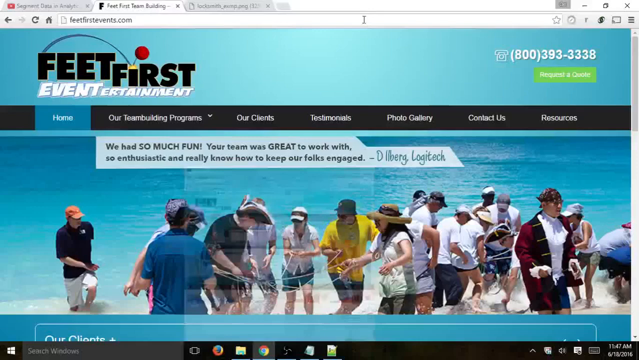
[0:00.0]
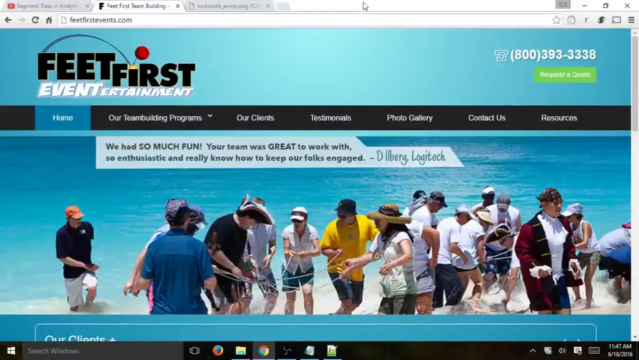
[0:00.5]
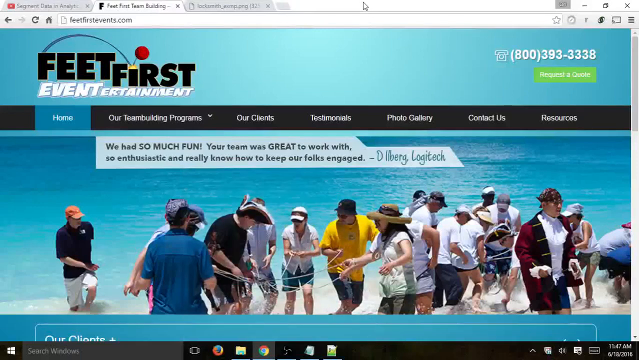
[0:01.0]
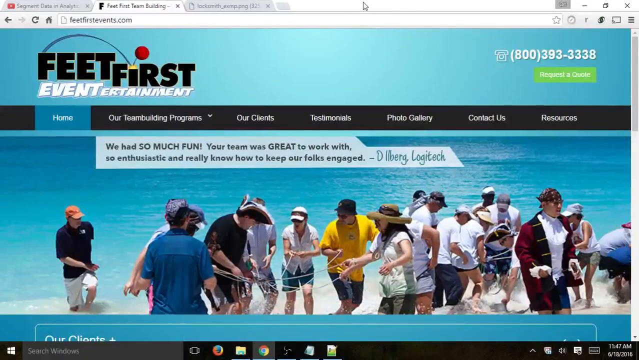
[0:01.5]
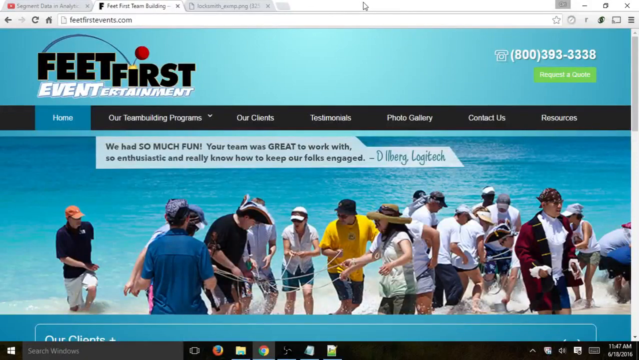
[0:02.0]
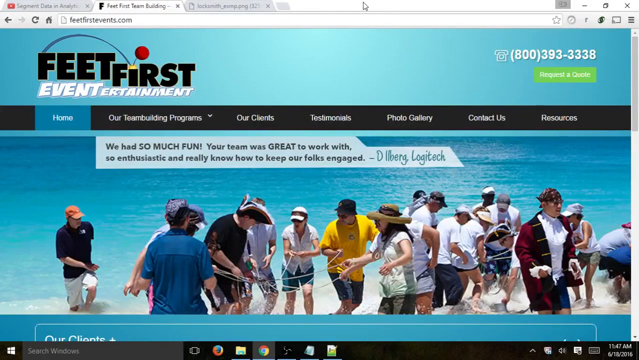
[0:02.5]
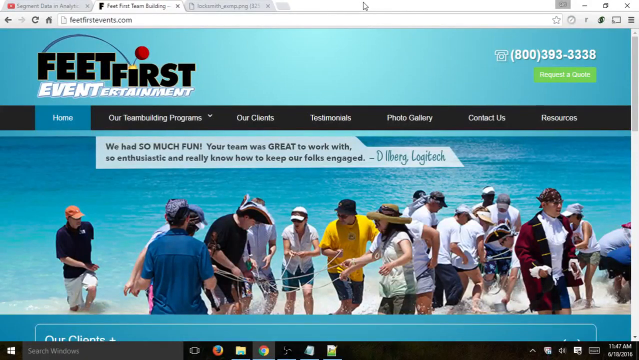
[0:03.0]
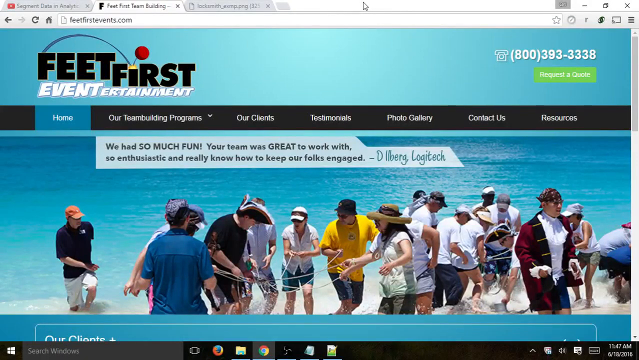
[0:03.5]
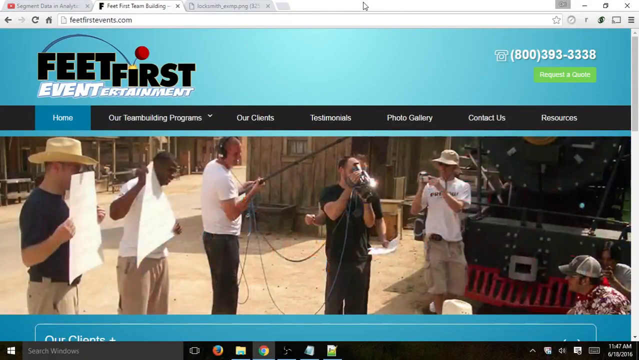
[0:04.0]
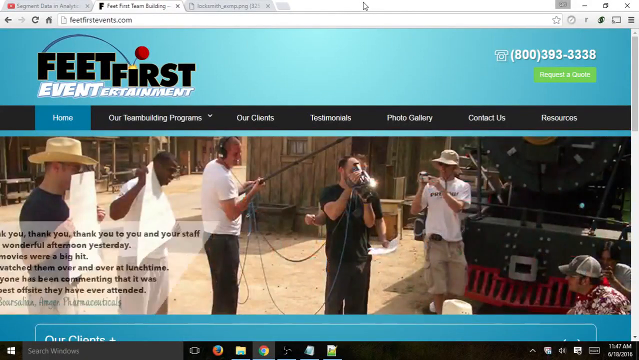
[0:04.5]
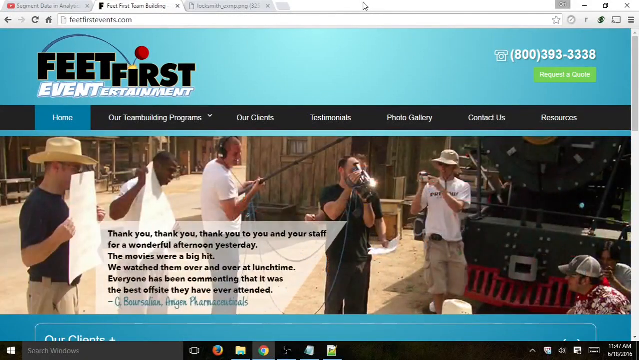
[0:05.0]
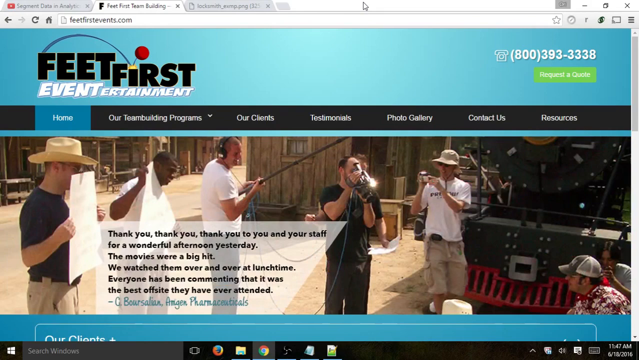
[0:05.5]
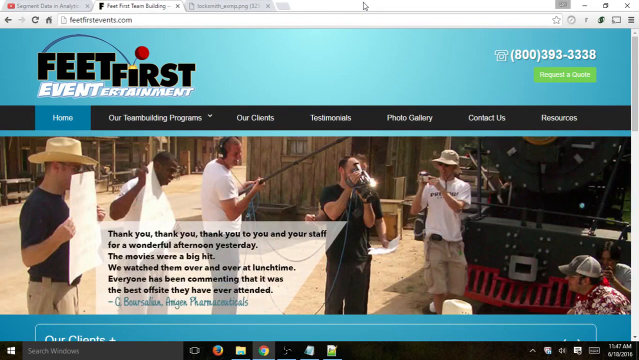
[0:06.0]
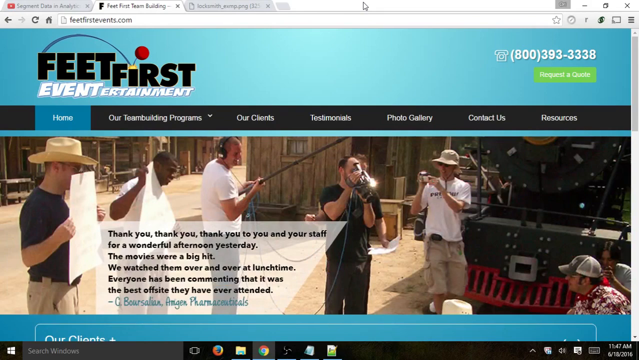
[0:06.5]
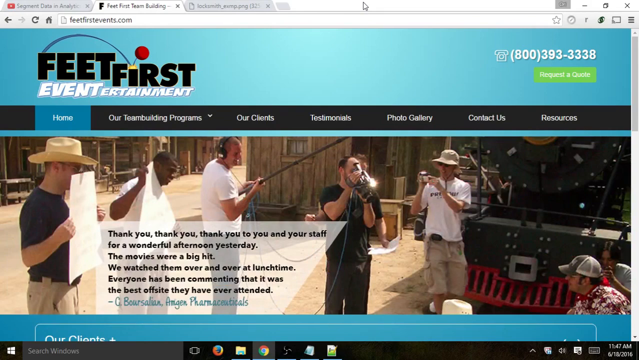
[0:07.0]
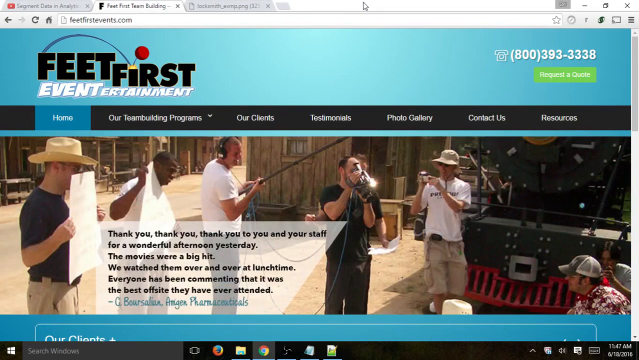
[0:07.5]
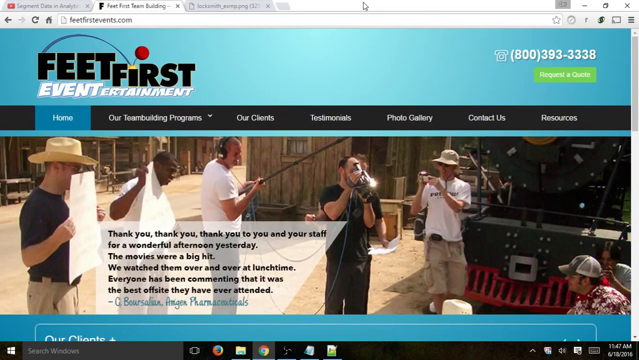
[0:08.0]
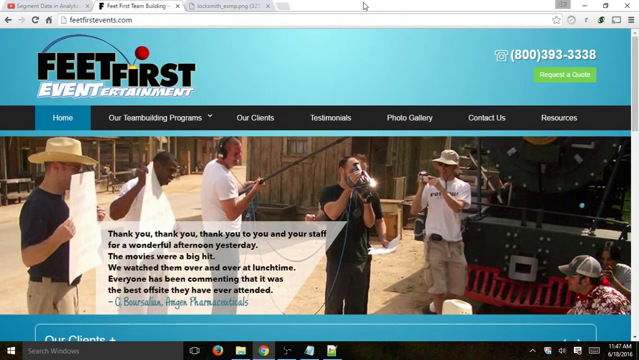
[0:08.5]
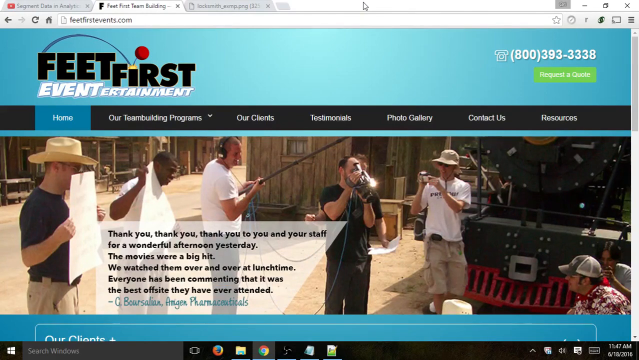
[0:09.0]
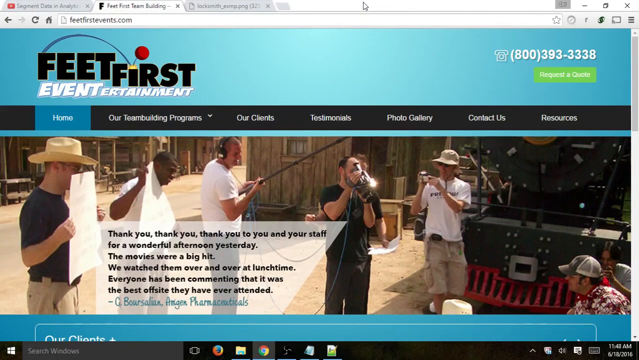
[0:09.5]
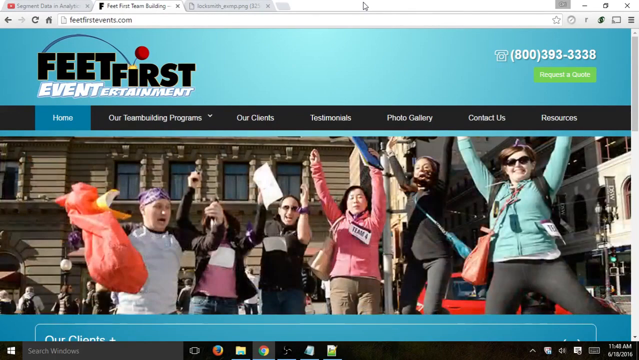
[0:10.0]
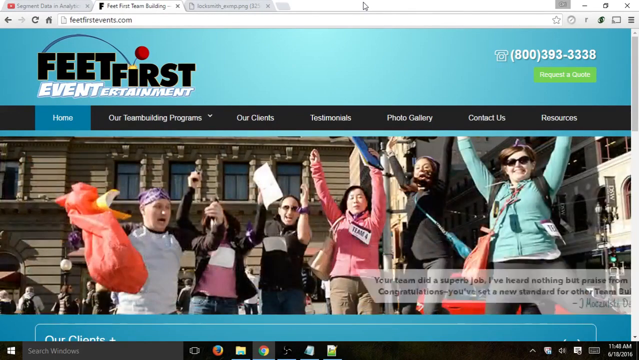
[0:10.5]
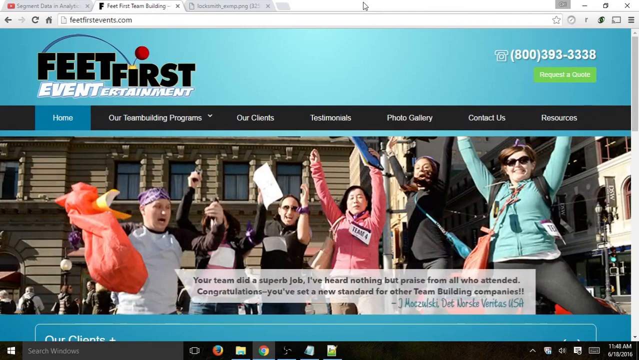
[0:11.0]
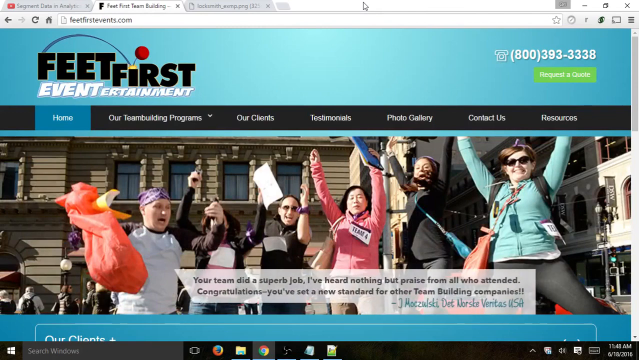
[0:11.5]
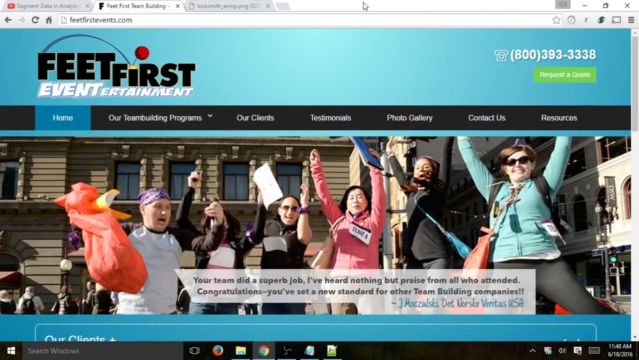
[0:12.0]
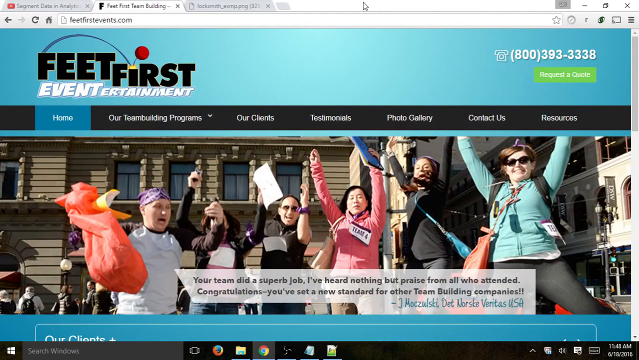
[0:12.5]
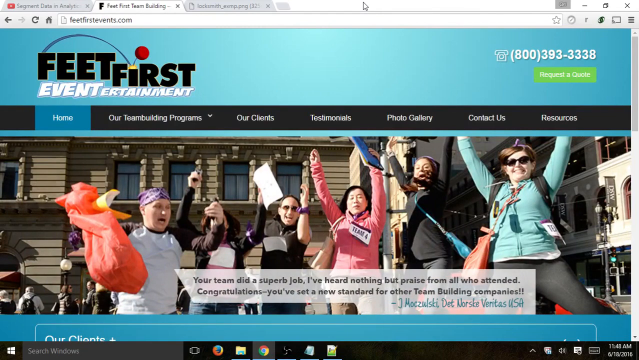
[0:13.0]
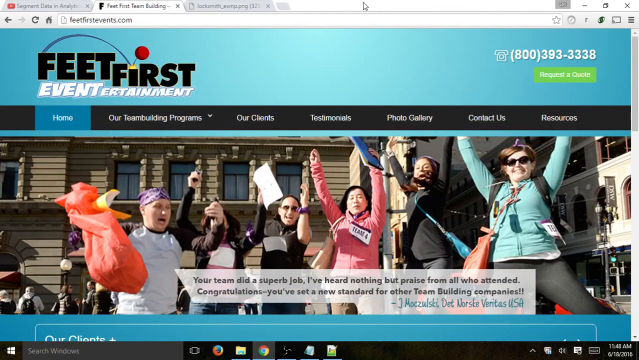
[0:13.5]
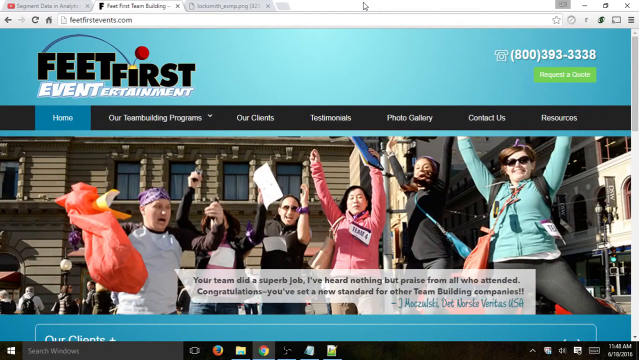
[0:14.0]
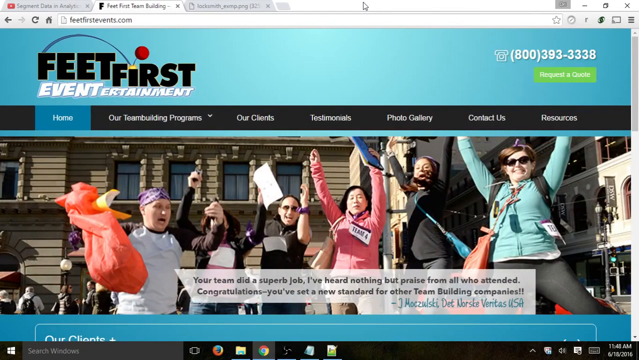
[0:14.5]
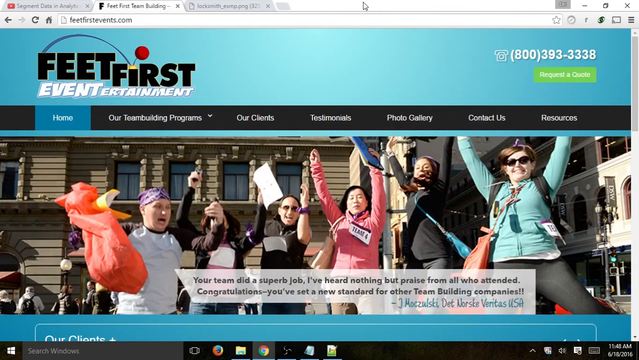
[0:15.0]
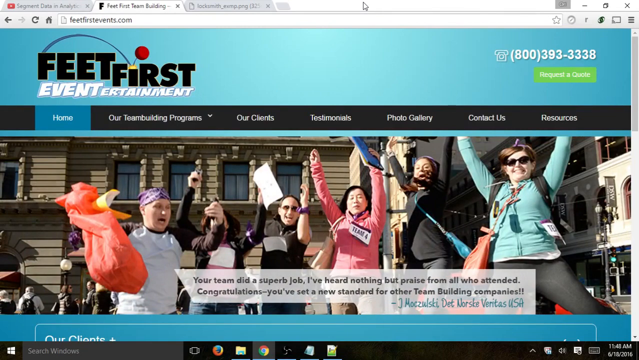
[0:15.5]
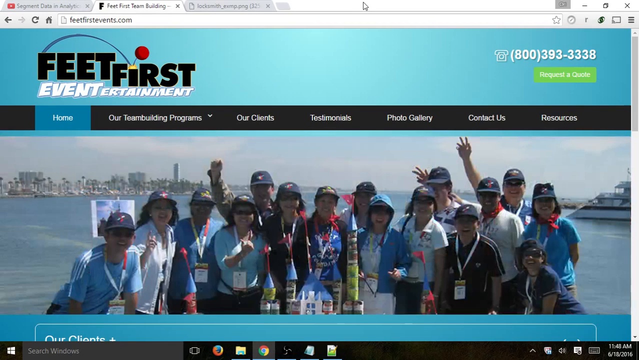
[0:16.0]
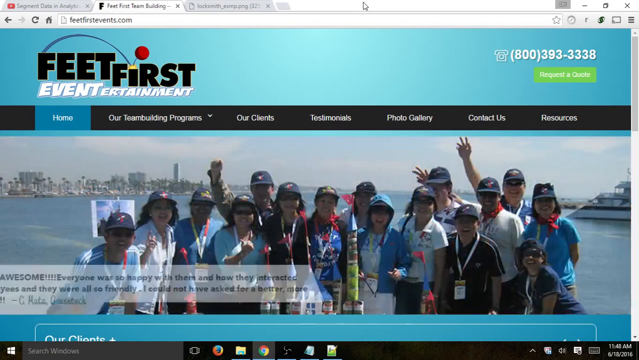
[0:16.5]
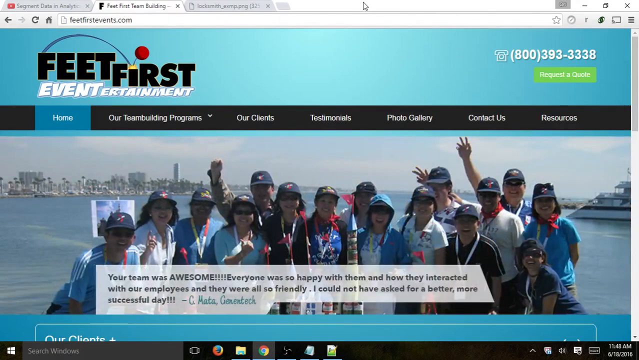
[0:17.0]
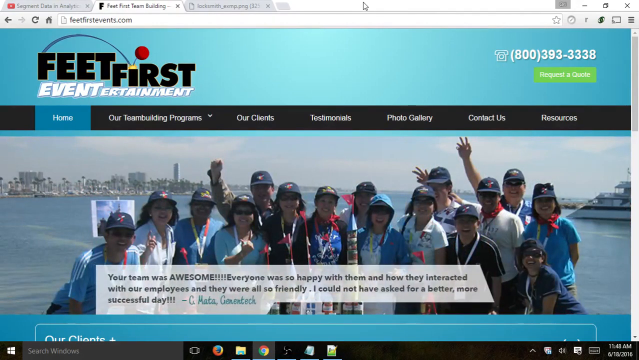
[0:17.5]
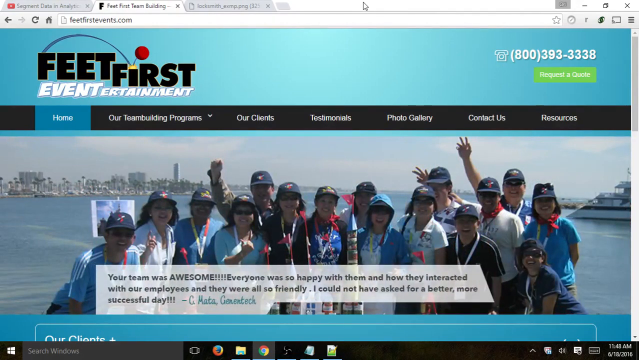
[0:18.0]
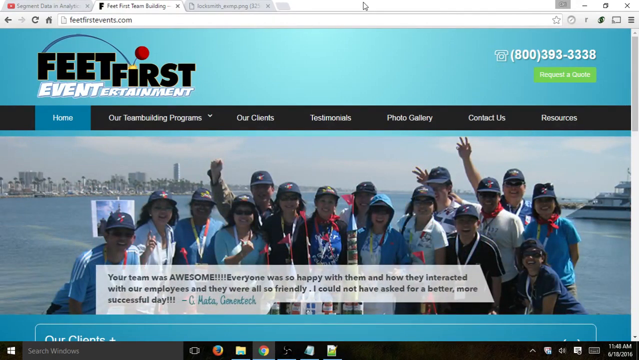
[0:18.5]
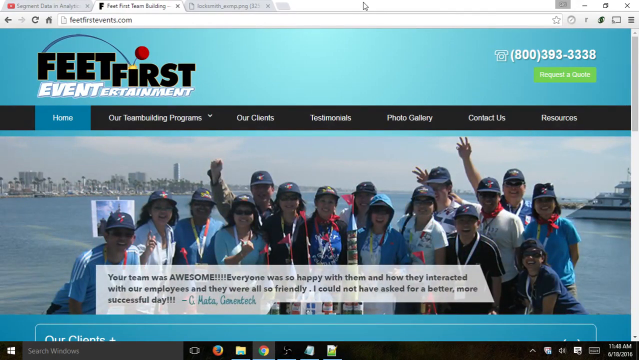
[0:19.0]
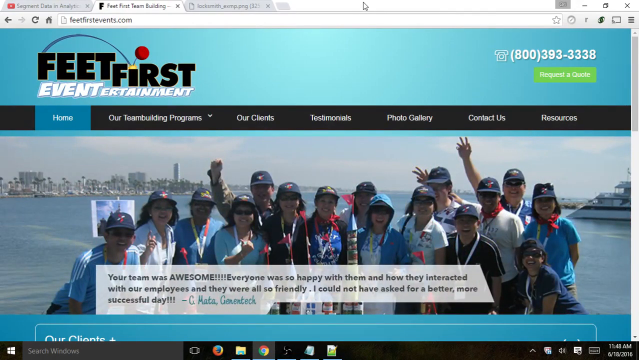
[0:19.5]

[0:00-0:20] A blurb for Feet First Entertainment shows their number, 800-393-3338, and a "request a quote" button. The menu has home, featured programs, our clients, testimonials, photo gallery, contact us and resources. The main picture is a slide of a group of people standing on a beach doing something with what seem to be ropes, apparently making rope ladders, along with a thank-you testimonial. It scrolls to a different scene that looks like a Mexican setting, with what looks like a Mexican horn band playing: two brass players stand with people around them, people hold up signs, and older wooden buildings are in the background. A separate testimonial from someone else appears. The picture then scrolls to someone holding up a red bag and a large number of people each holding up paper; they seem excited, and someone is jumping, with a third testimonial. All of this is within the Feet First page background. Finally it goes to a group of people in front of what looks like New York City, possibly across from Manhattan.